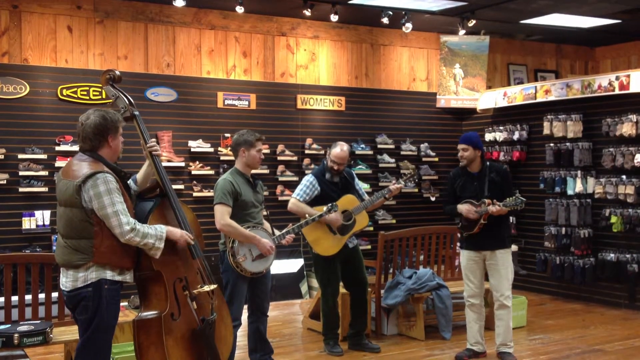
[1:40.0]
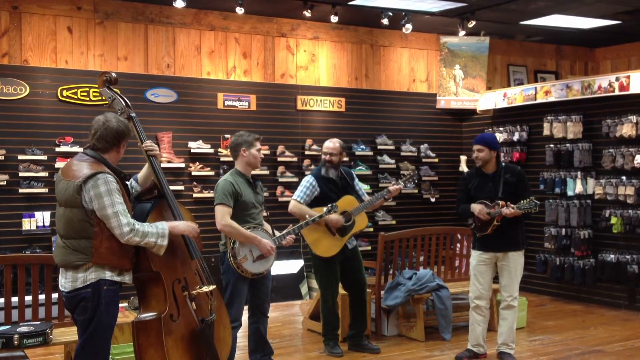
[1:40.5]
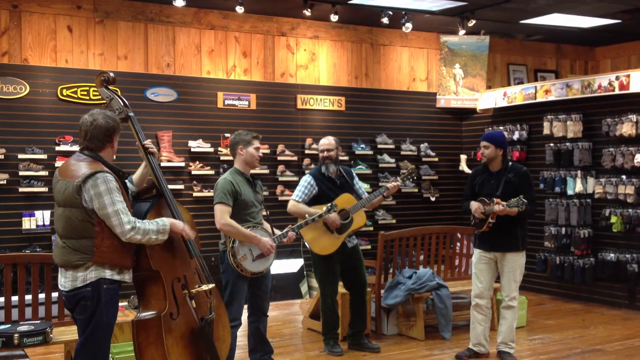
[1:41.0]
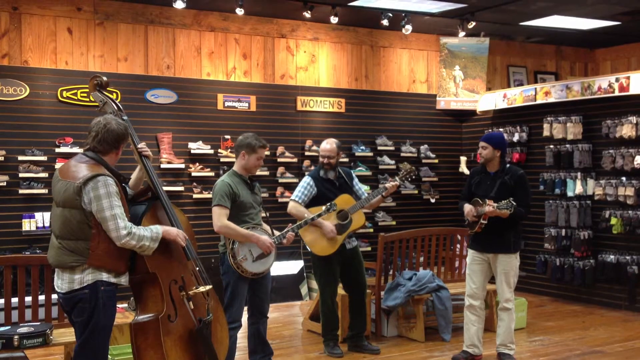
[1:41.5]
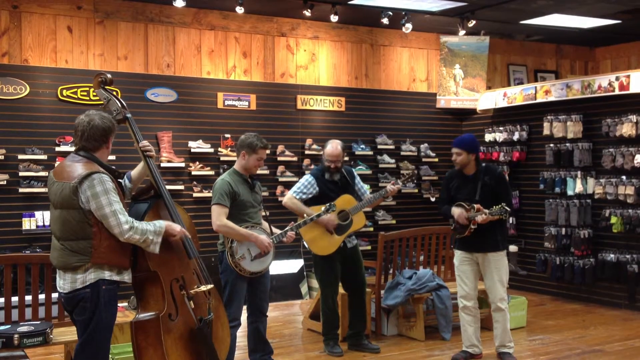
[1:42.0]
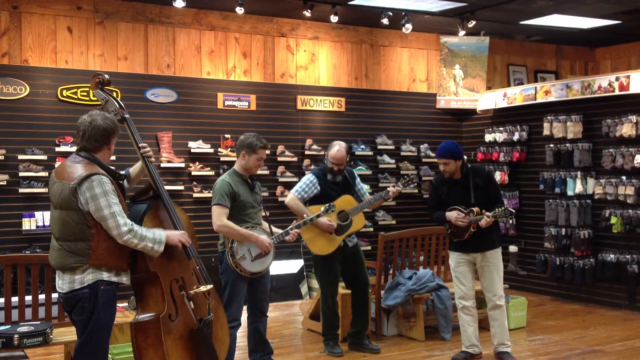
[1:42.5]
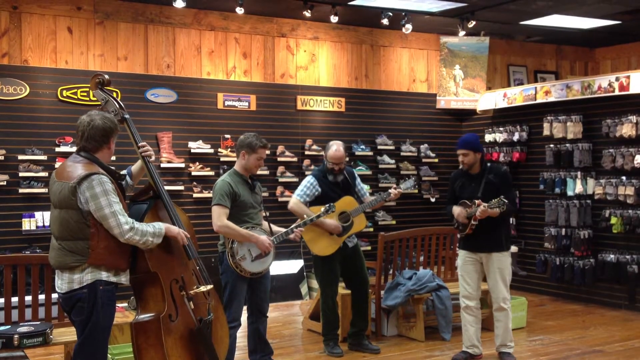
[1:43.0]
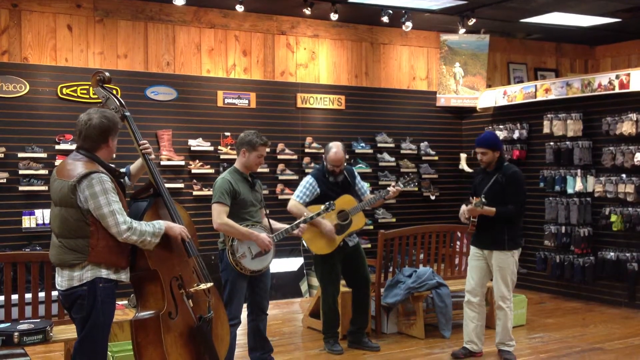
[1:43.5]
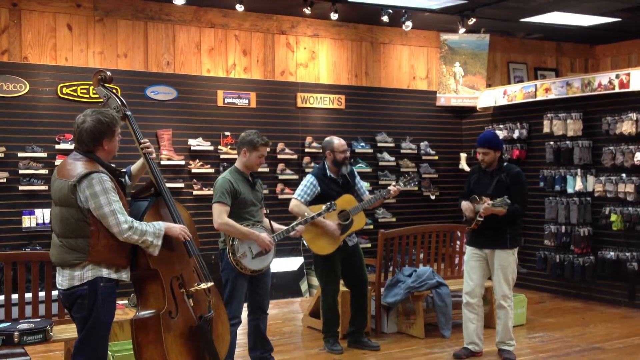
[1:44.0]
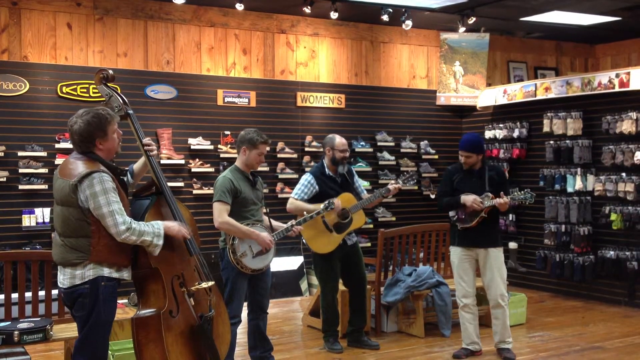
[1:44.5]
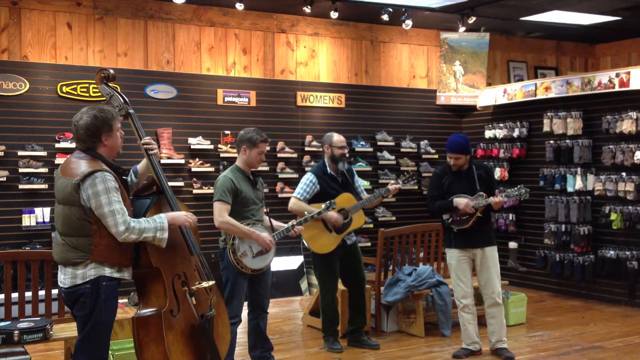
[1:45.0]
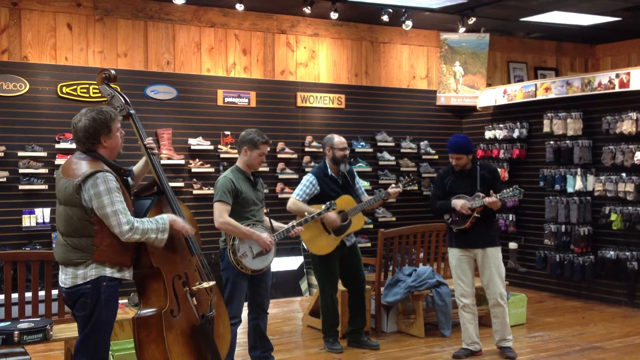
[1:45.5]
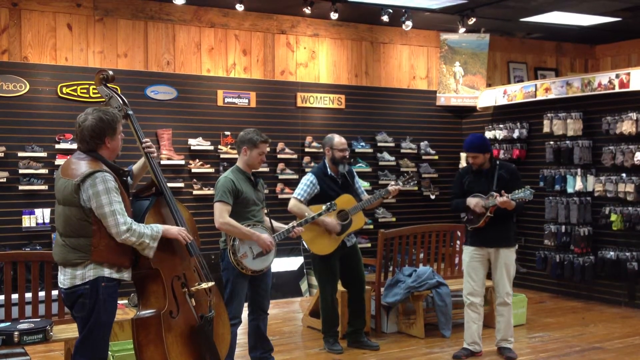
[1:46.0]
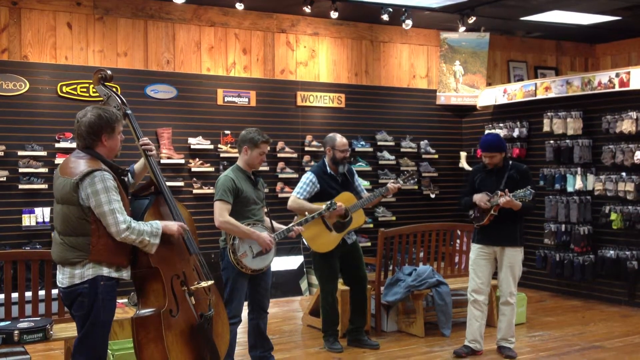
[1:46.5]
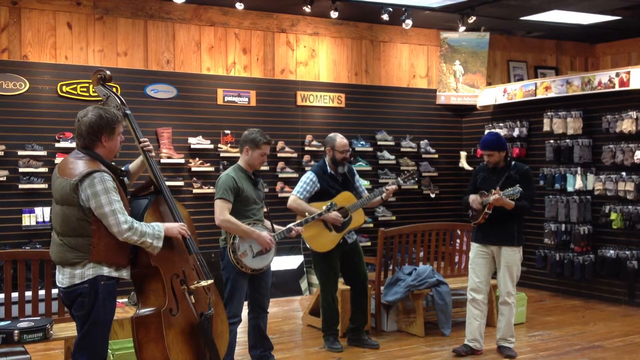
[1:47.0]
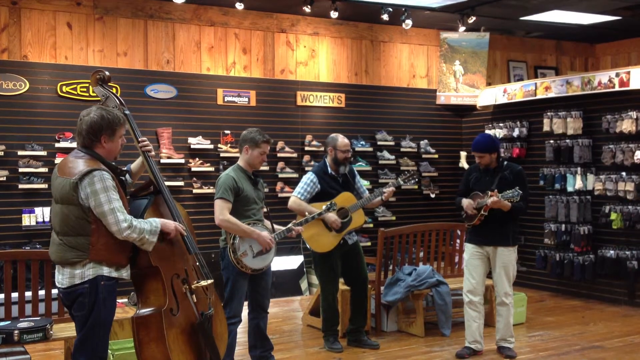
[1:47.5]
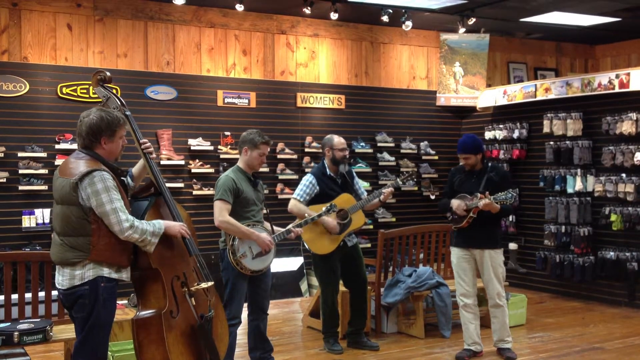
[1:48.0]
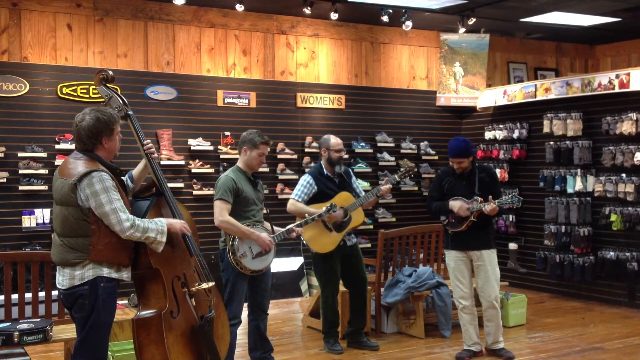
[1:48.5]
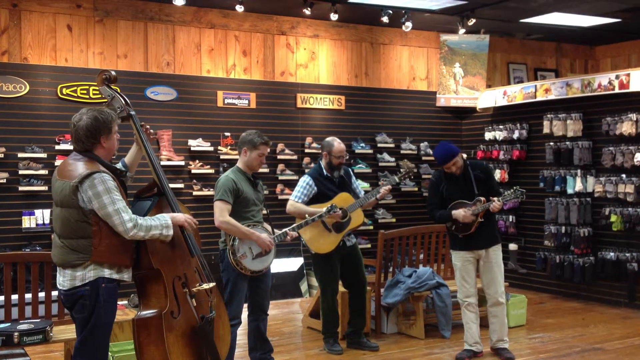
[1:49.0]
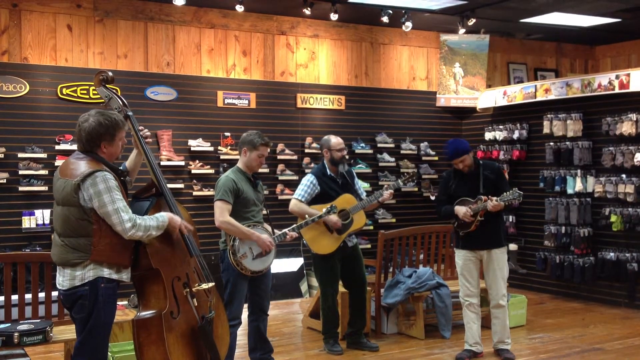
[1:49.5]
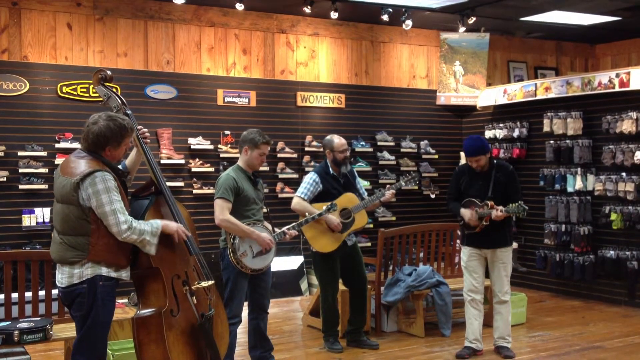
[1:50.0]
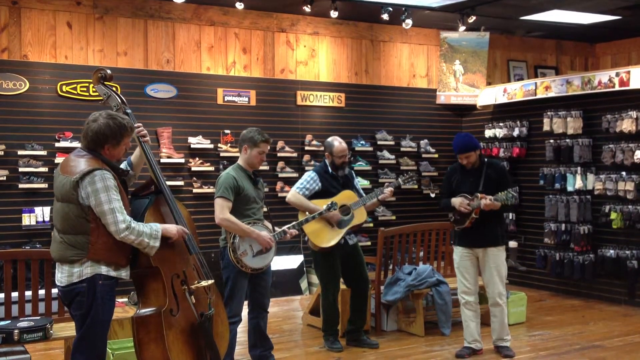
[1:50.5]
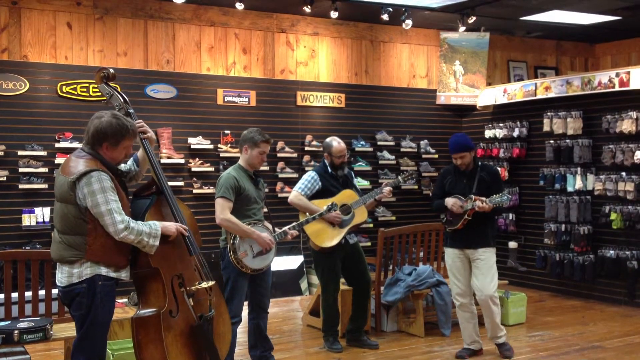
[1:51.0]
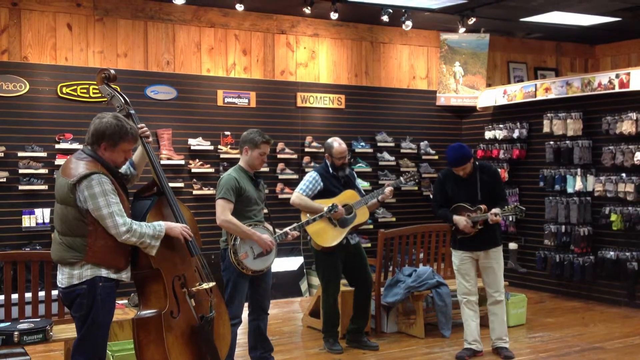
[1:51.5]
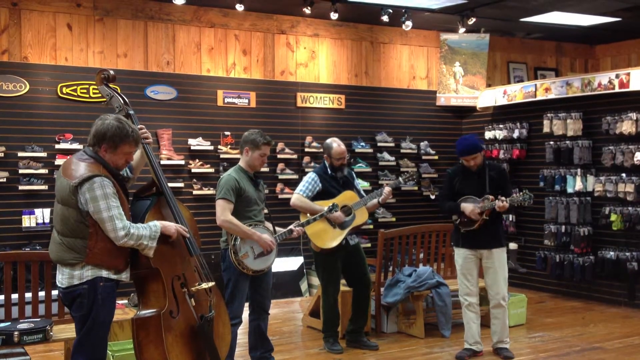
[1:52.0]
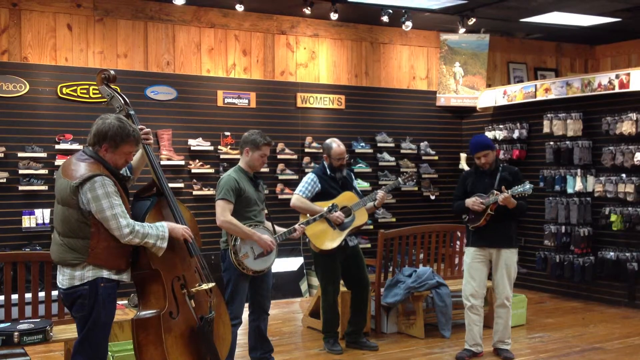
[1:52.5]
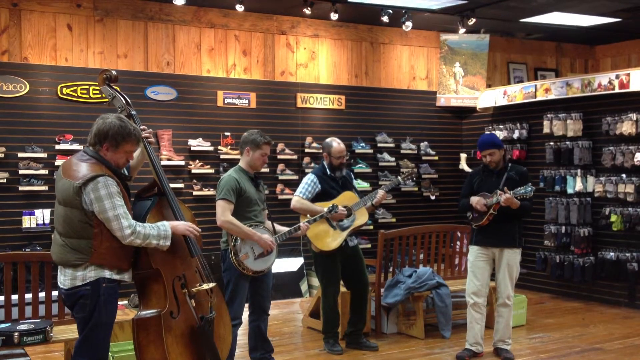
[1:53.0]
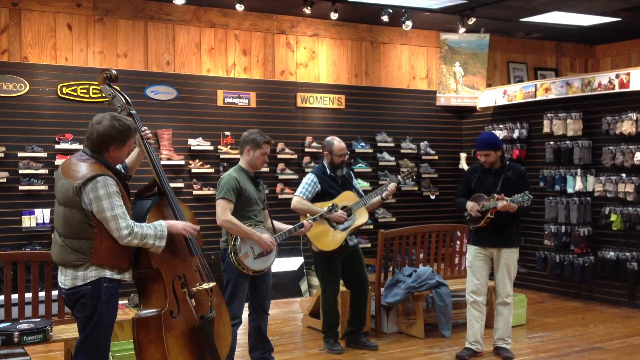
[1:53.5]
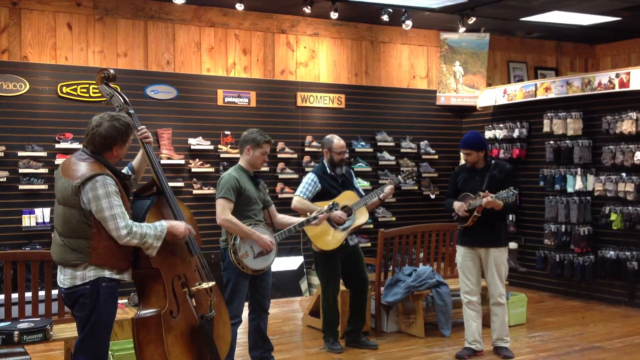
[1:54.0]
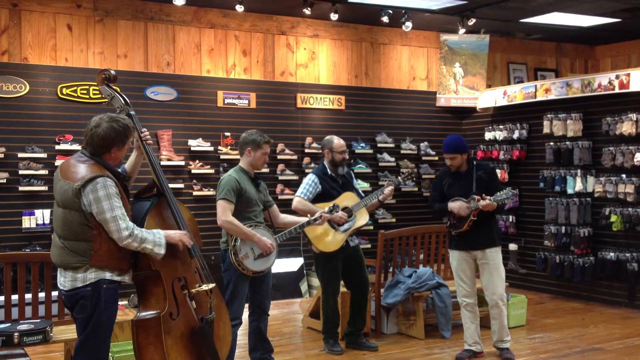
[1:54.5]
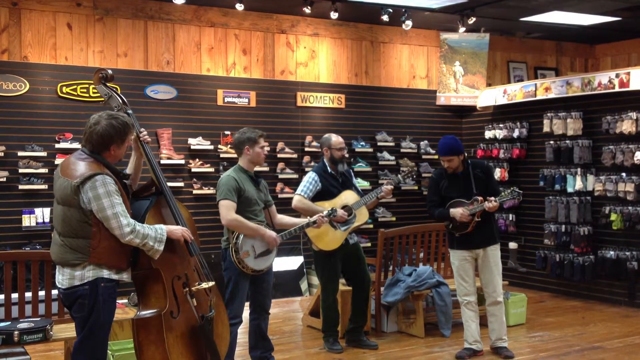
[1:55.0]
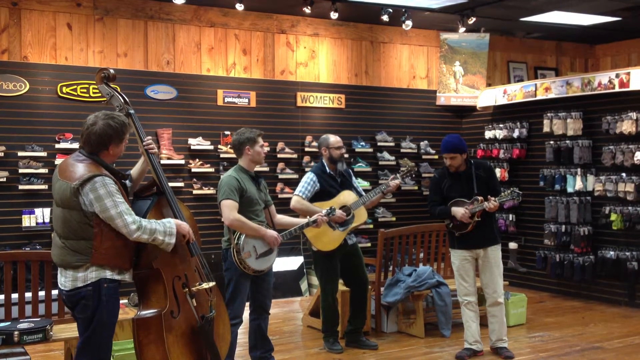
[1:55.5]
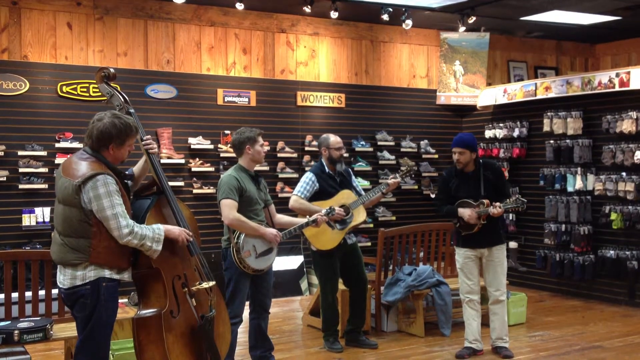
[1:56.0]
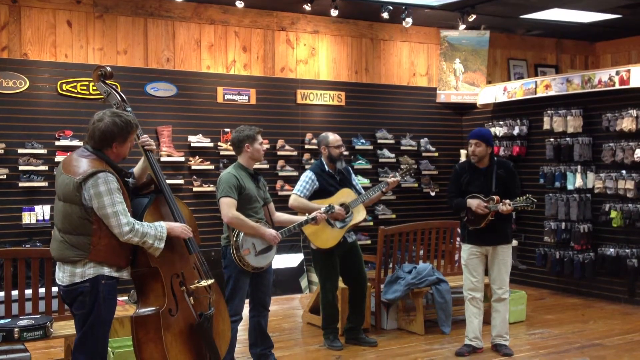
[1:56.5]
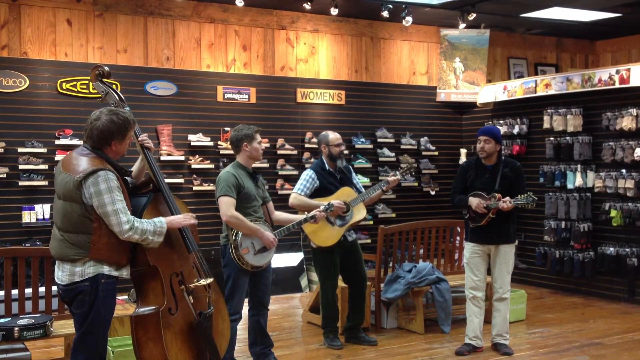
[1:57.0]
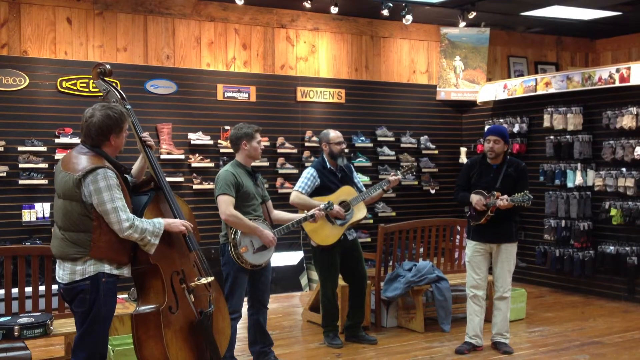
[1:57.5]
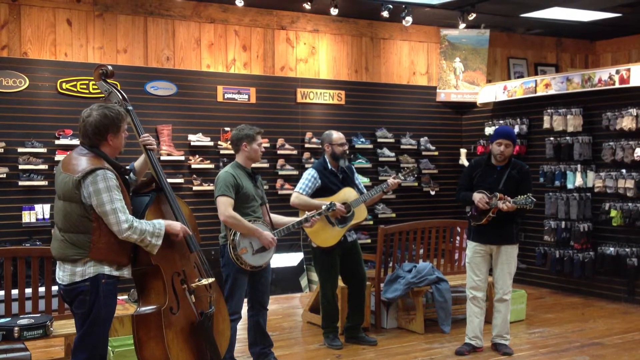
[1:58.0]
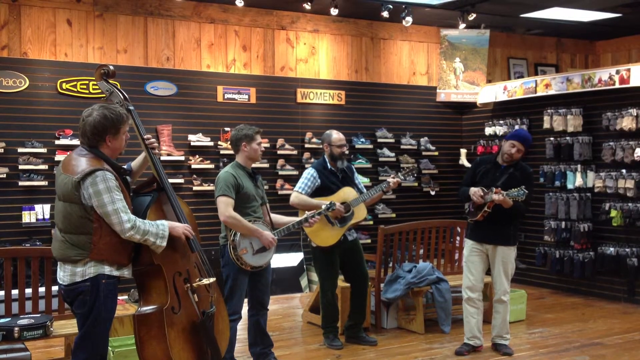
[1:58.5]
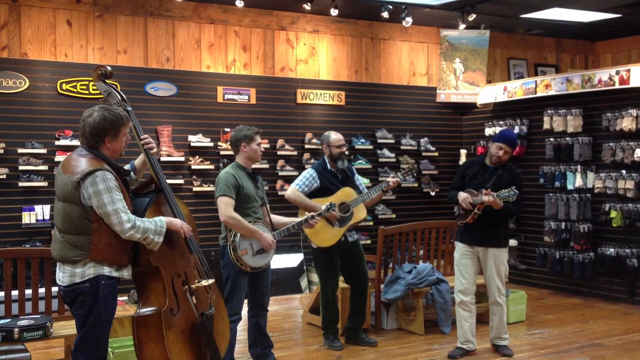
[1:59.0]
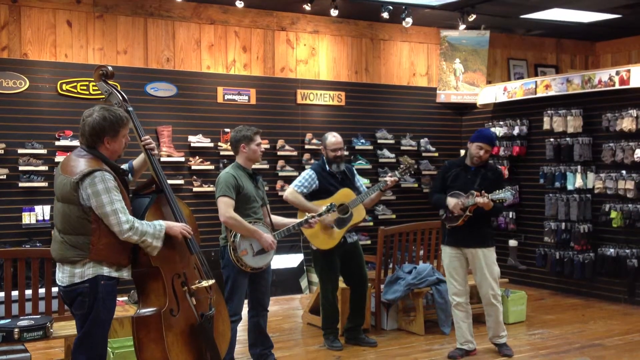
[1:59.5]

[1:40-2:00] Everyone is still playing. The man with the acoustic guitar starts playing harder and more aggressively, moving his body more. The man with the small guitar, wearing the beanie, keeps moving and playing aggressively. The acoustic player looks over and apparently says something to the banjo player. The banjo player is very low-key in his playing. The cello player picks up a little, playing probably a little quicker and more aggressively. The man with the small guitar looks intently at the acoustic player, who is playing harder and smiling.